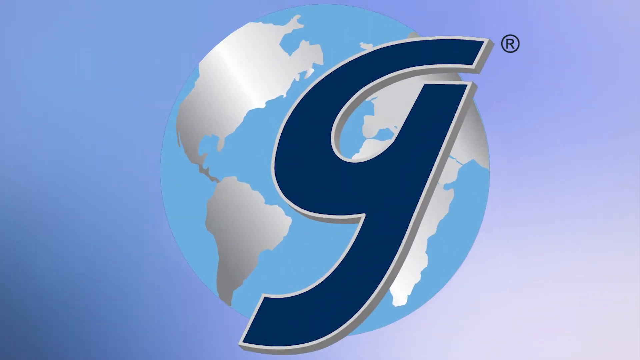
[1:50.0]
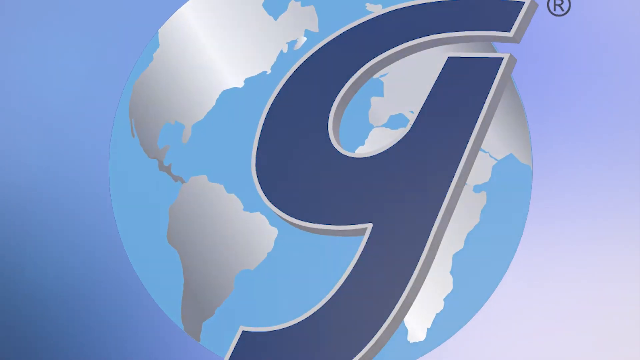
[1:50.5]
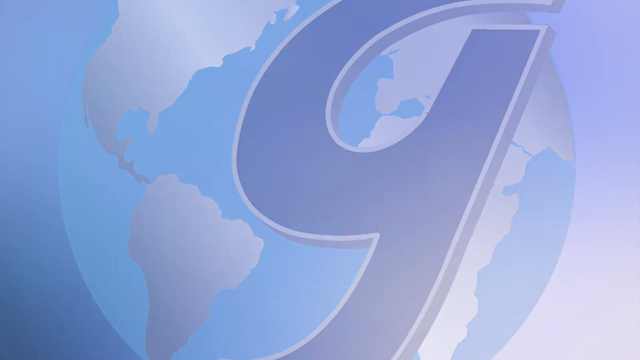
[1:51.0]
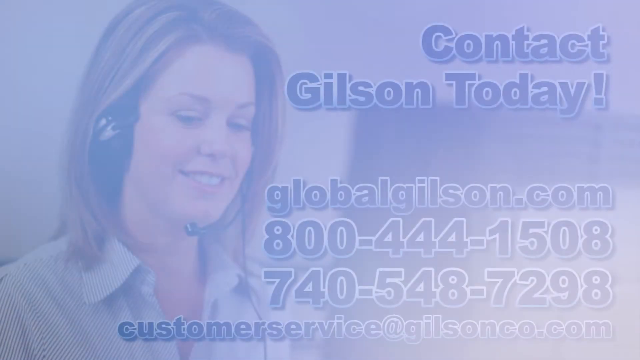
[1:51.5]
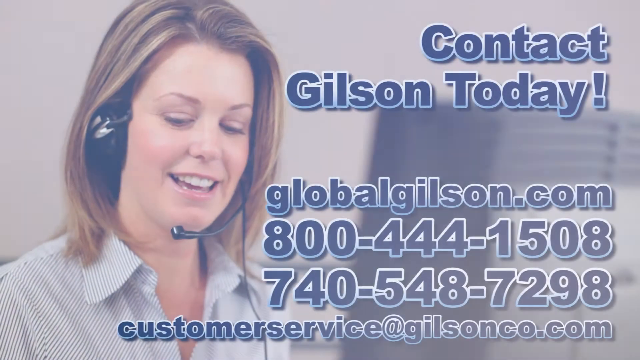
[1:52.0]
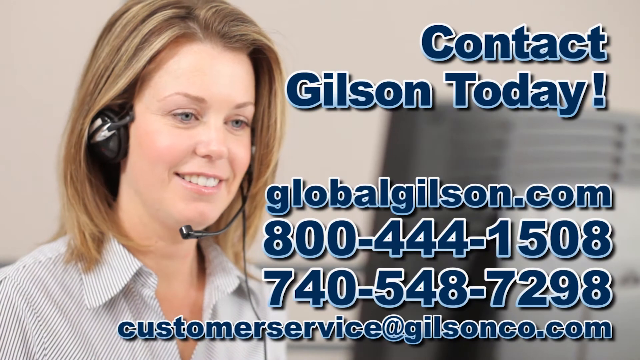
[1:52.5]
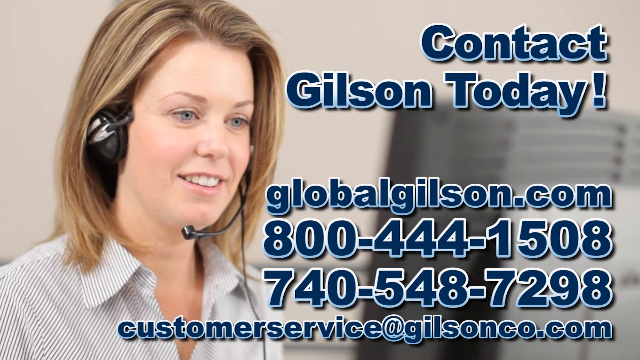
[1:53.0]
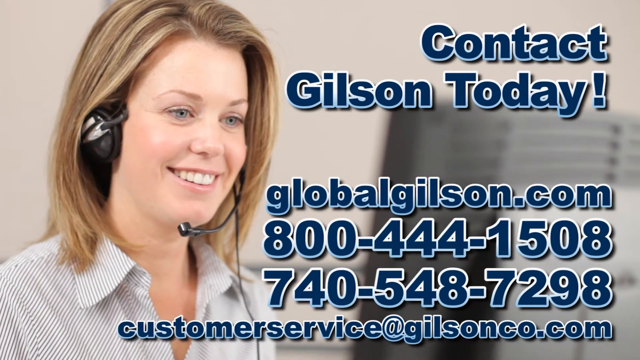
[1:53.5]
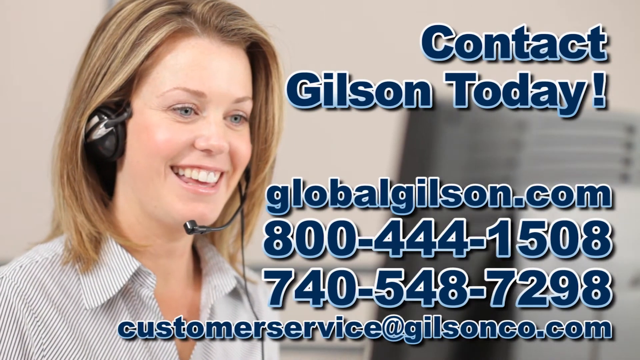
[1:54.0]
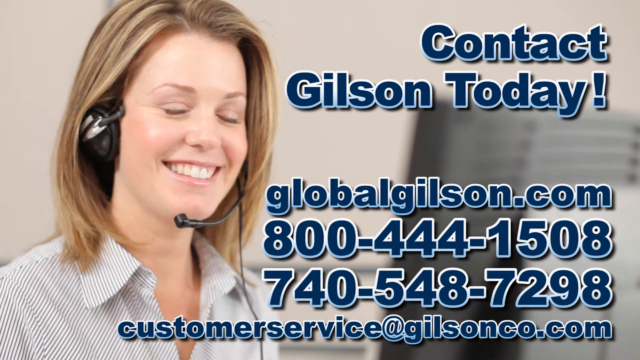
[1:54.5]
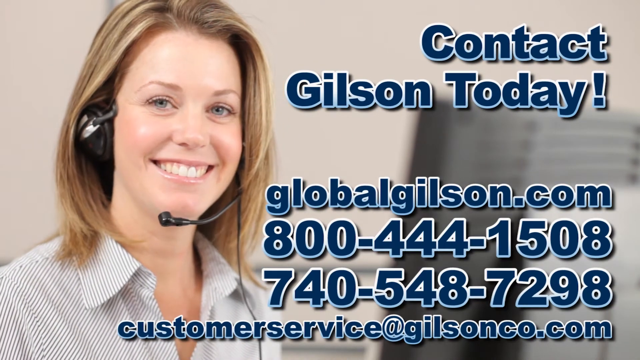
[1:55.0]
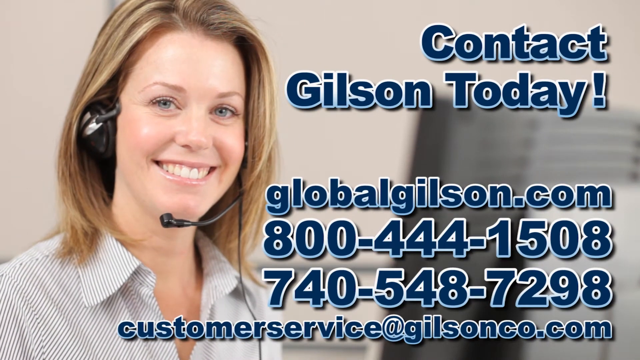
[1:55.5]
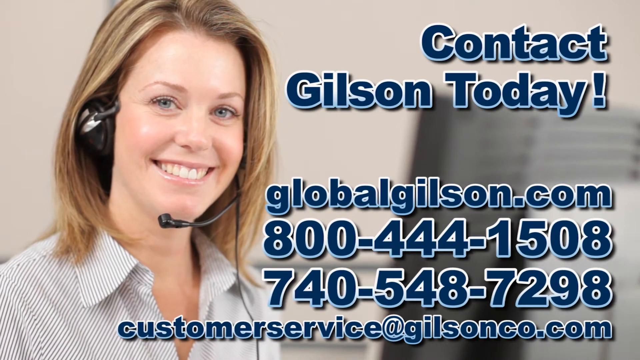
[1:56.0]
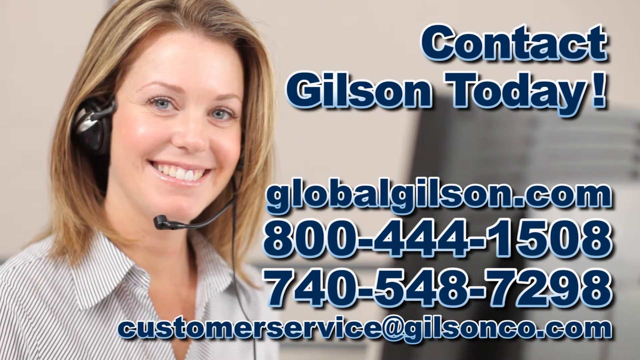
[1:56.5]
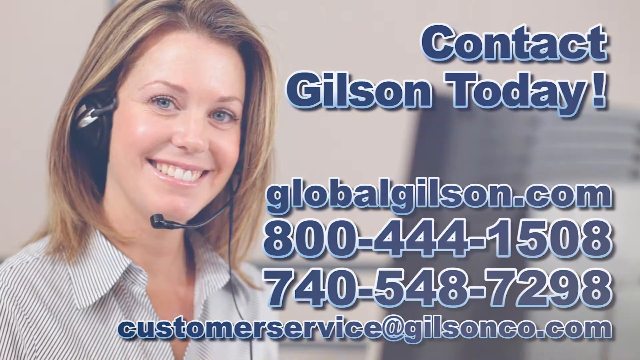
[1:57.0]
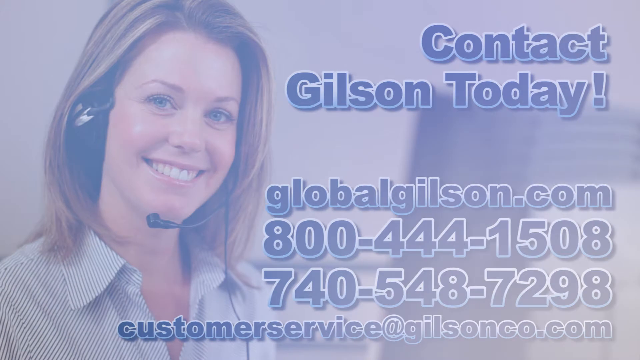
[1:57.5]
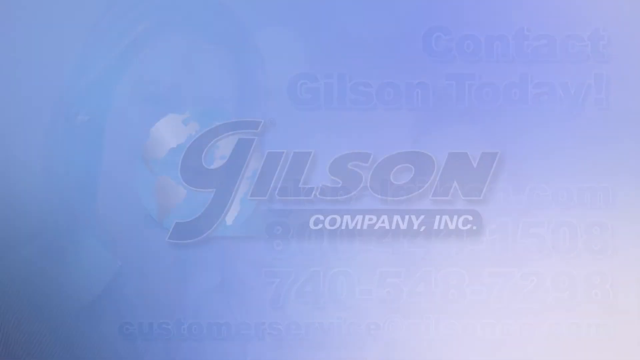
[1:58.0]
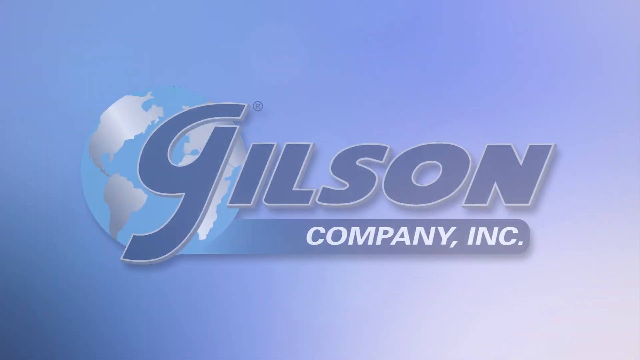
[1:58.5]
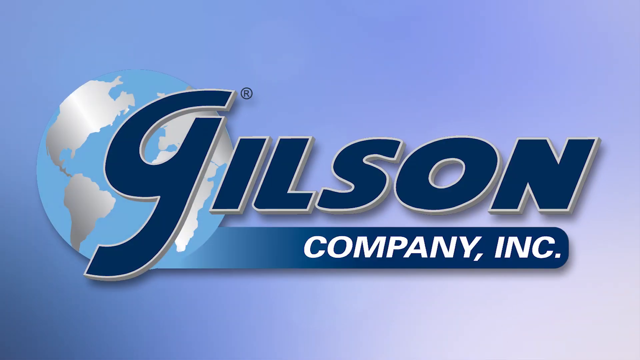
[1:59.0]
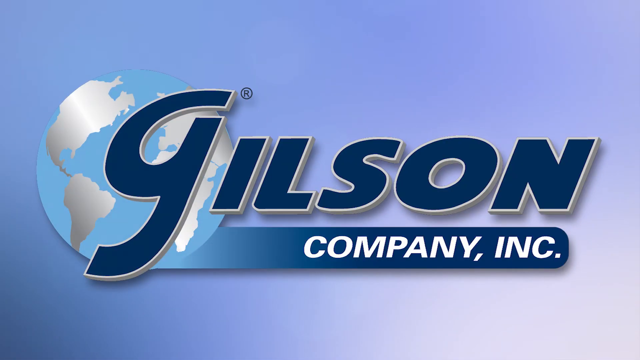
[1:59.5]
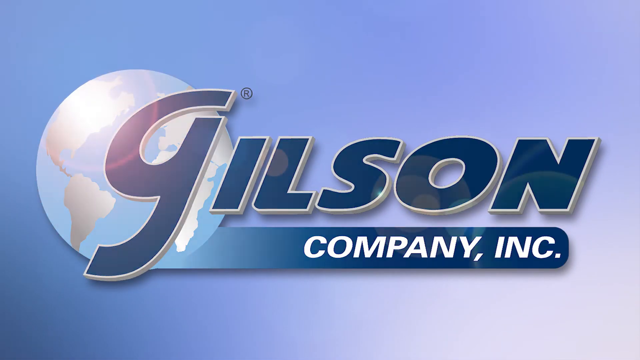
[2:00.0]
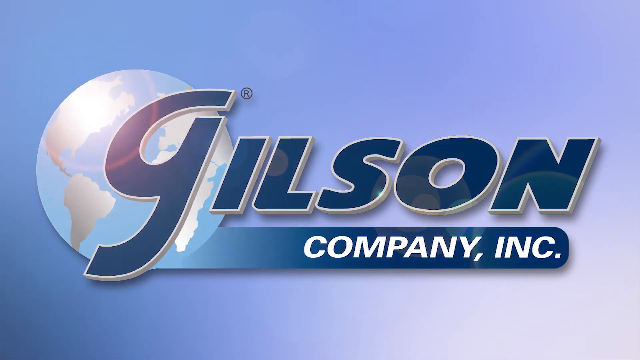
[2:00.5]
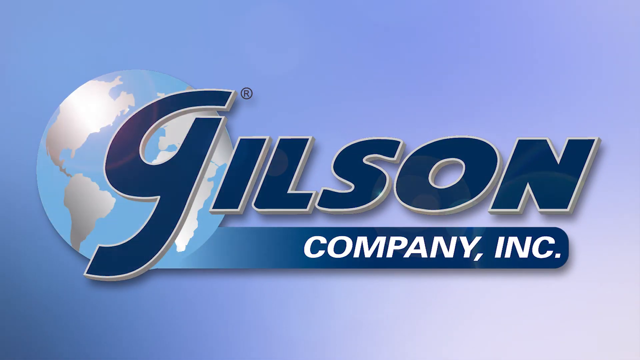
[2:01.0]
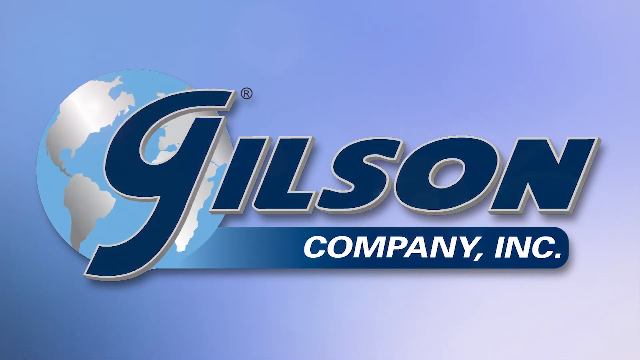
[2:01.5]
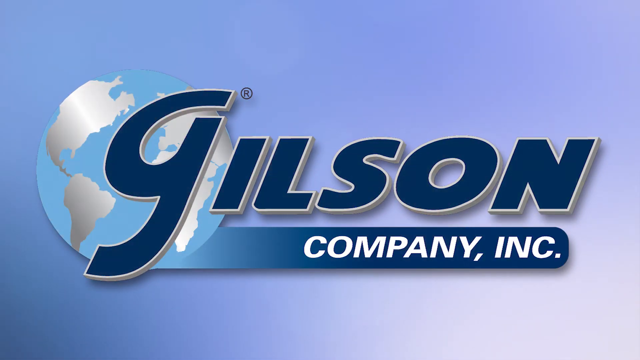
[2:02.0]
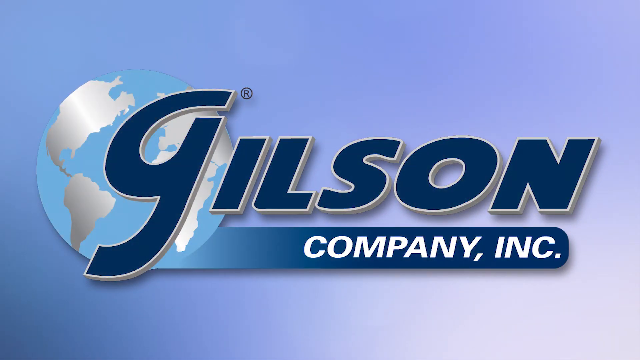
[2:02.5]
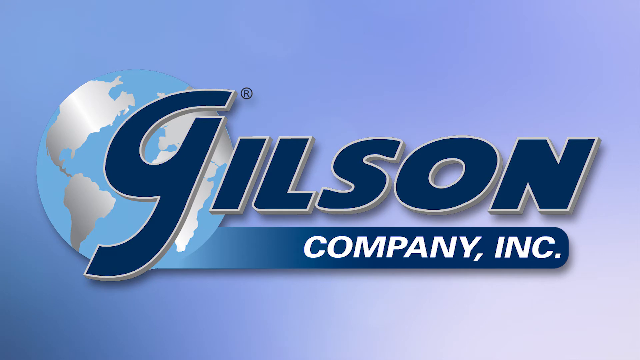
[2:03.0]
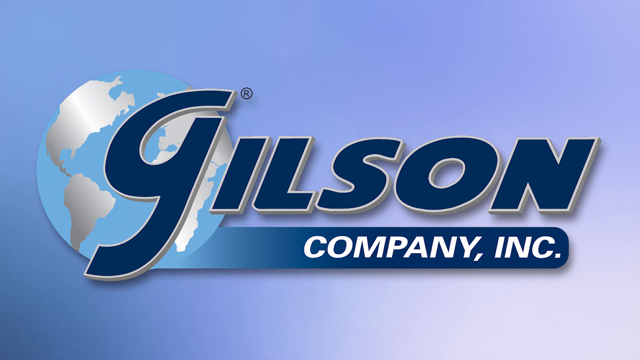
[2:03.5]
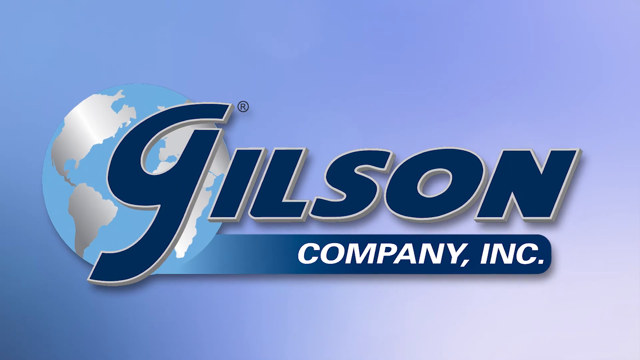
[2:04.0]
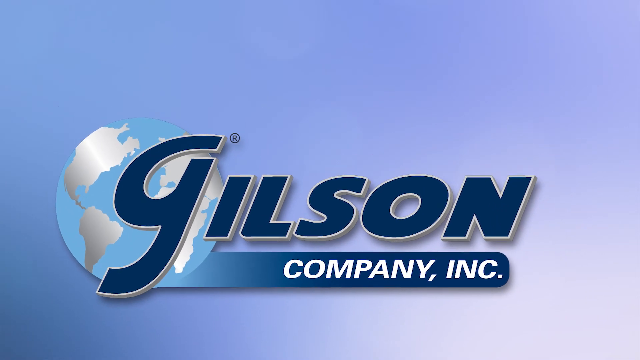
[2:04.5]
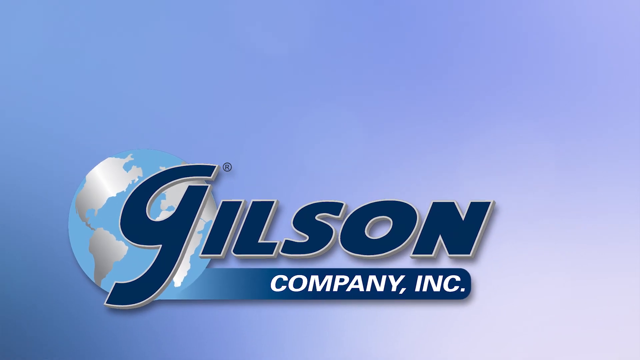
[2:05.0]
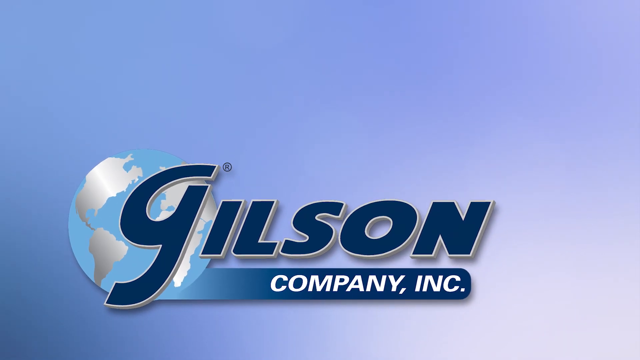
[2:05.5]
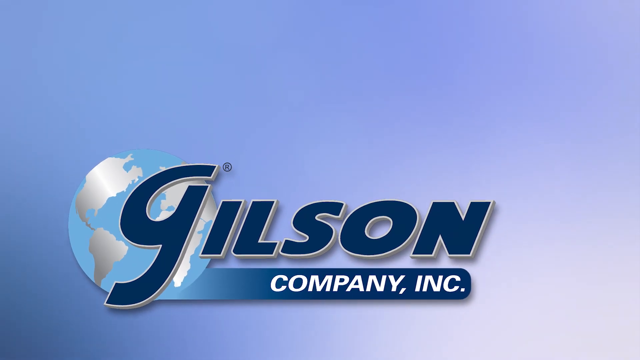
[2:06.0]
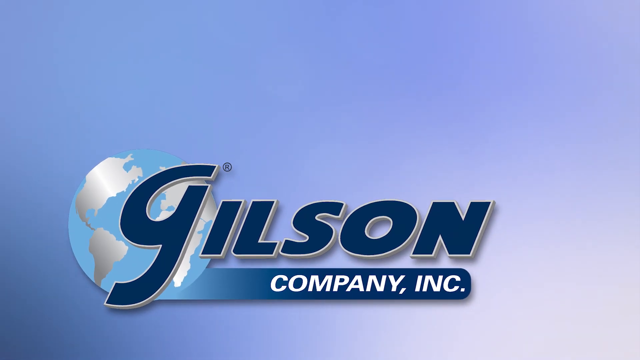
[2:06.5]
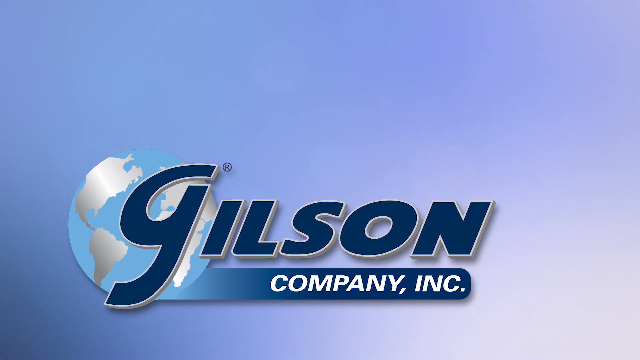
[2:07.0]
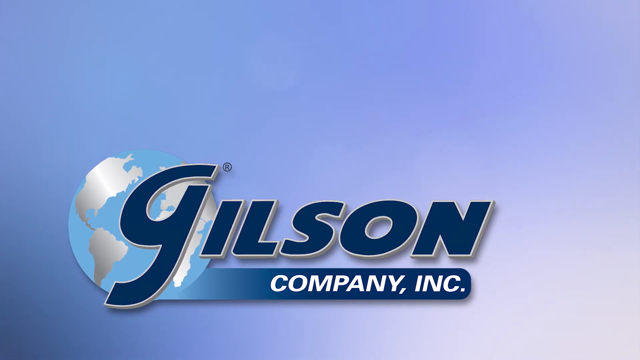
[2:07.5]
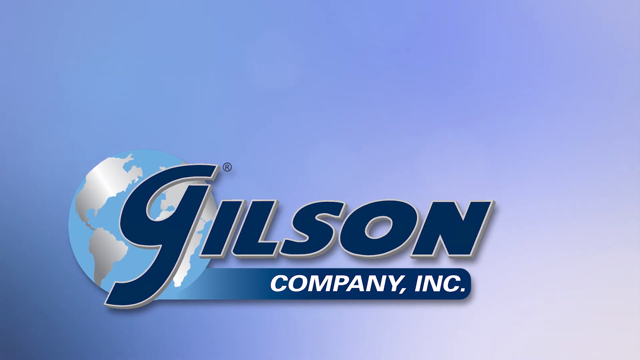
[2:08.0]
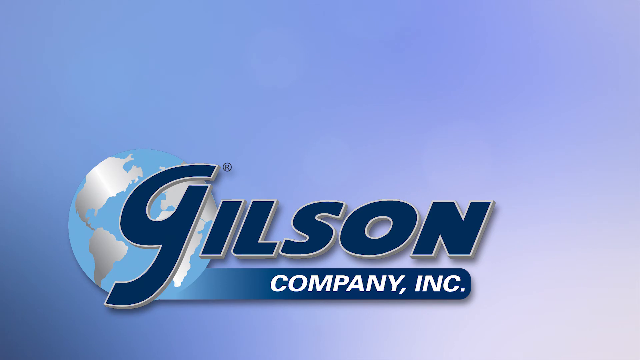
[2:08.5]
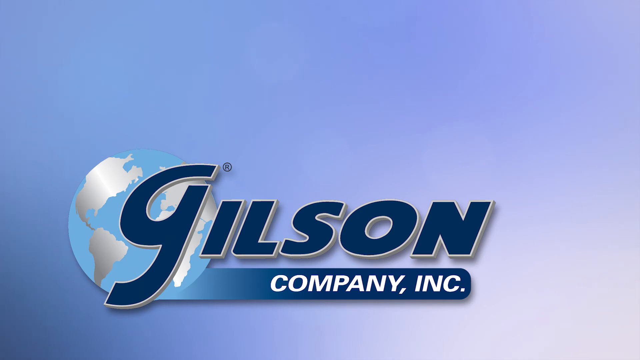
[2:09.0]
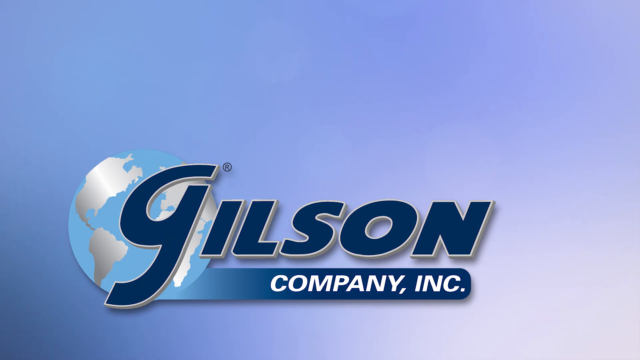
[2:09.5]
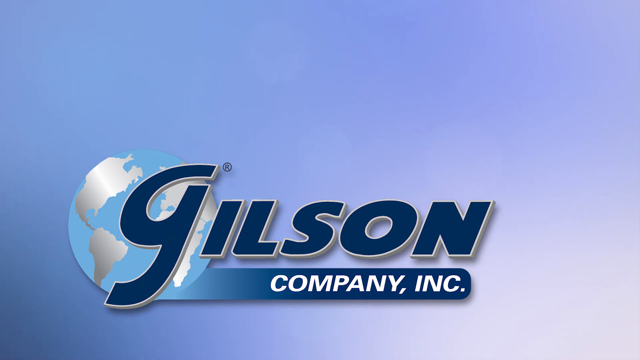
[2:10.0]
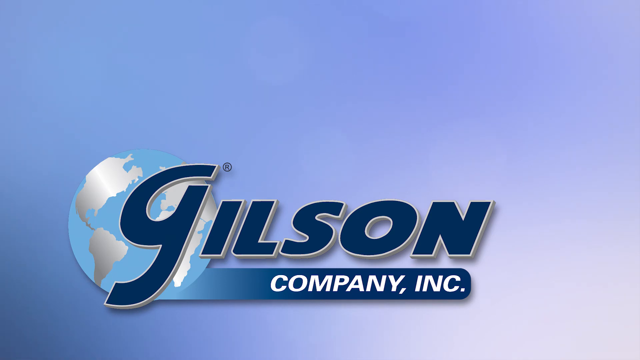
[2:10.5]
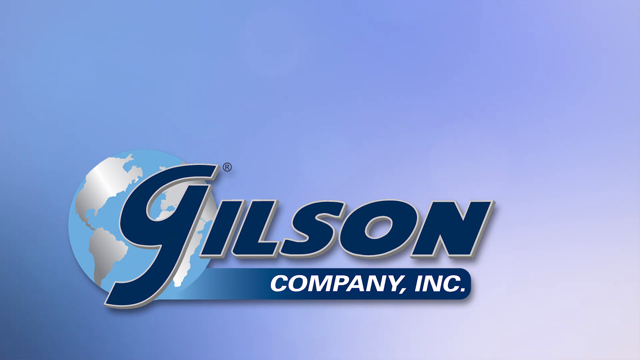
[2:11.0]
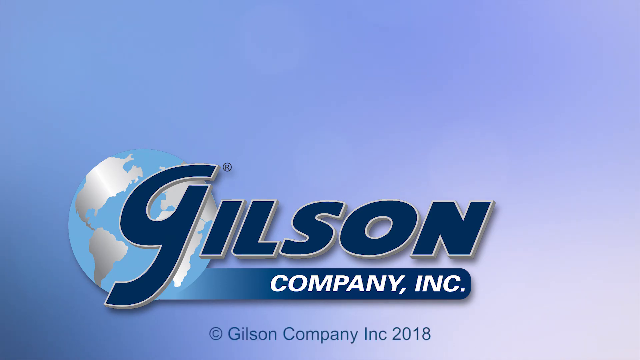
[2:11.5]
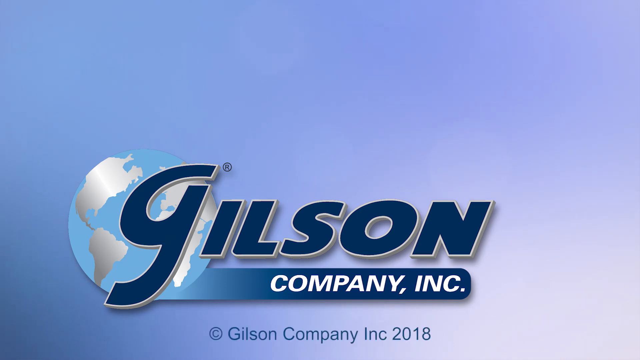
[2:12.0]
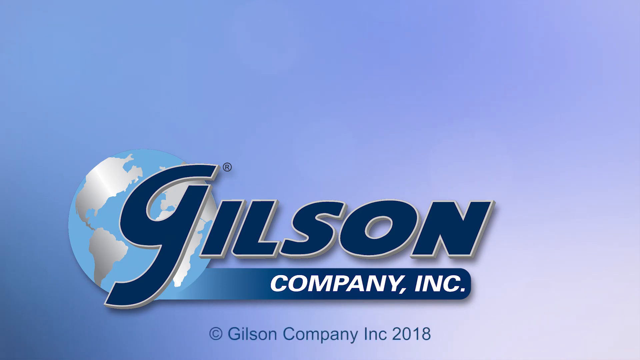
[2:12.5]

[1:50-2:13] The video ends with contact information, including the phone numbers 800-444-1508 and 740-548-7298 and a customer service email address. The company shown is Gilson.